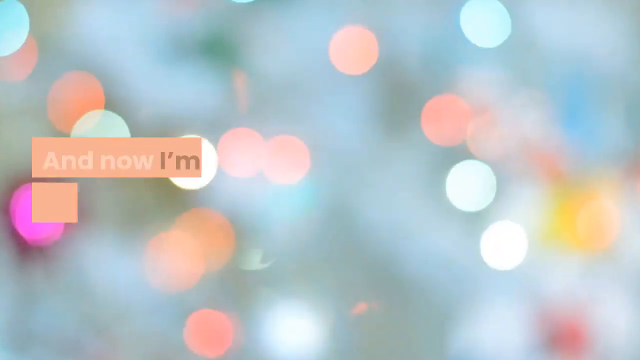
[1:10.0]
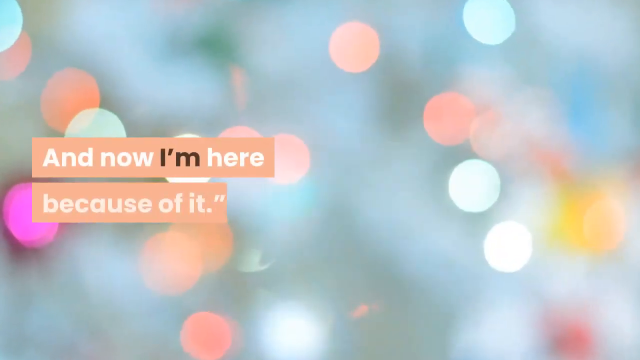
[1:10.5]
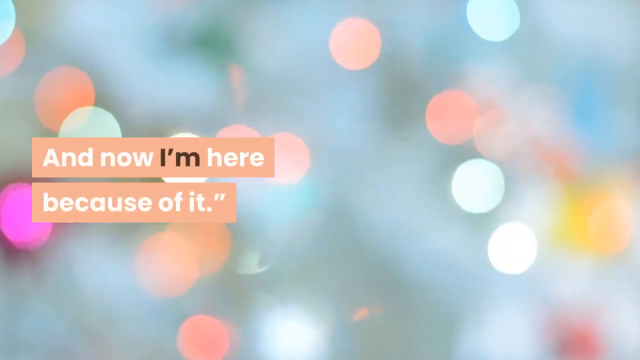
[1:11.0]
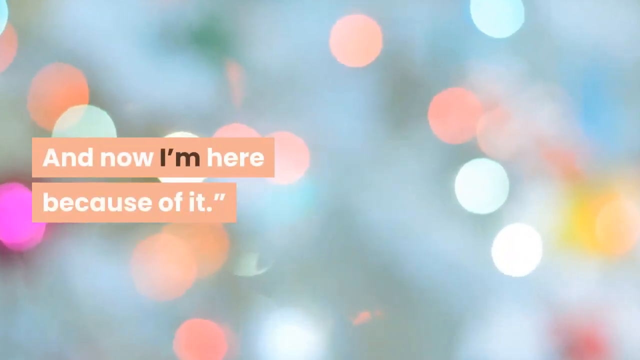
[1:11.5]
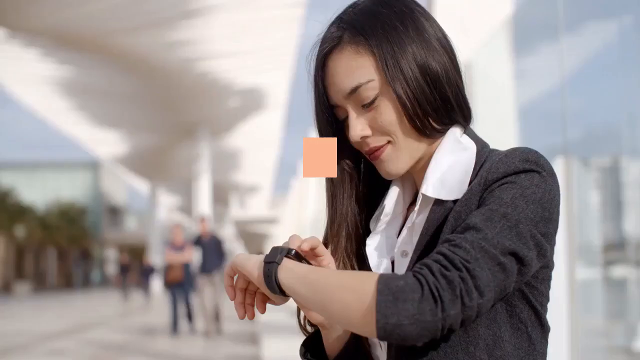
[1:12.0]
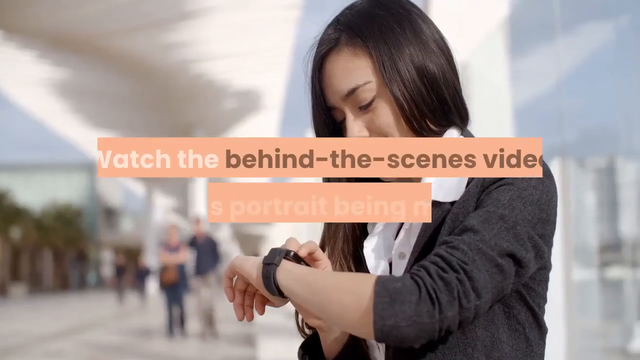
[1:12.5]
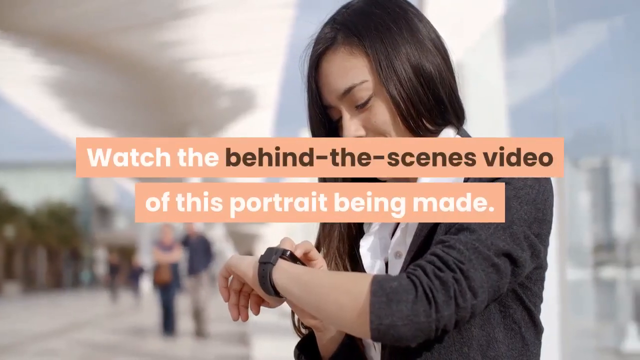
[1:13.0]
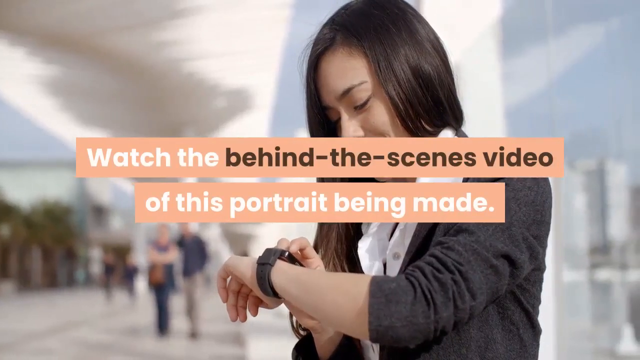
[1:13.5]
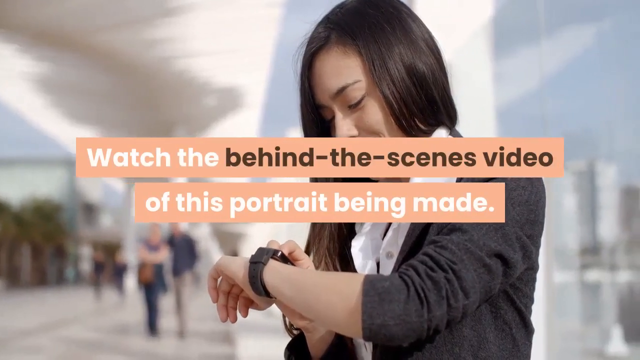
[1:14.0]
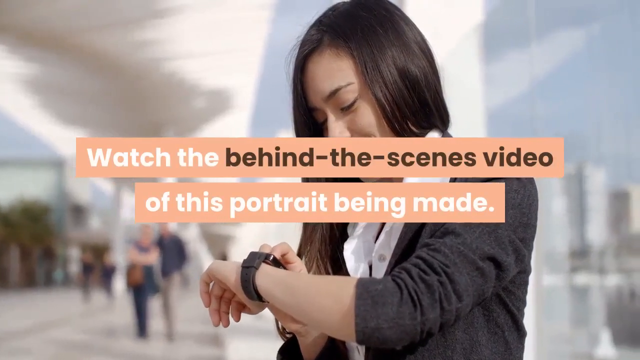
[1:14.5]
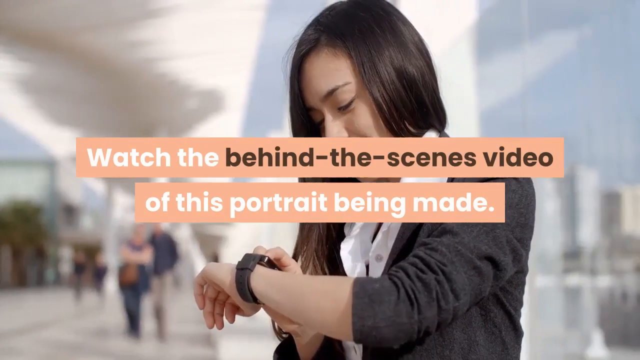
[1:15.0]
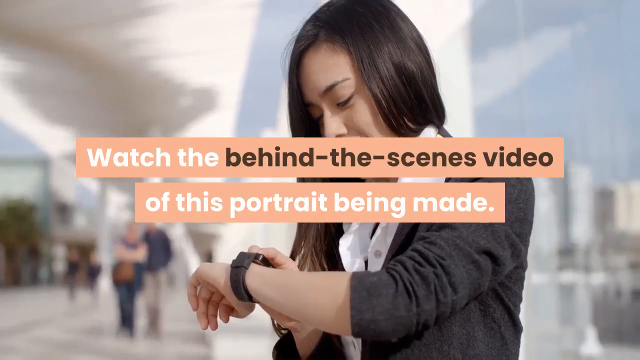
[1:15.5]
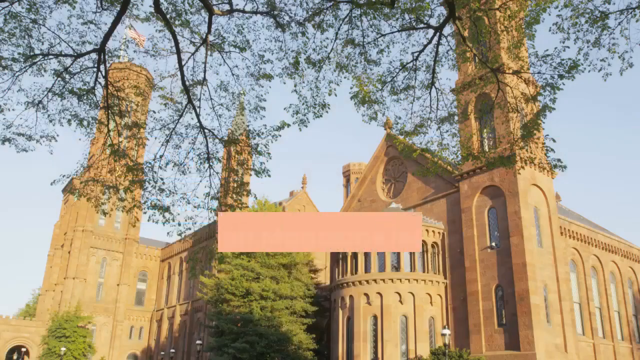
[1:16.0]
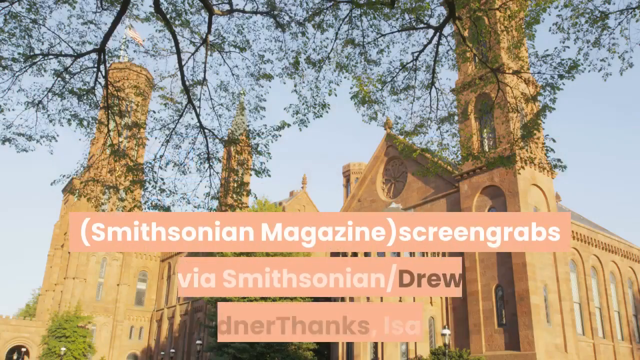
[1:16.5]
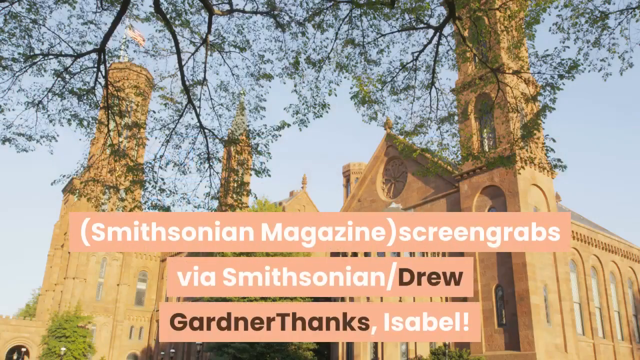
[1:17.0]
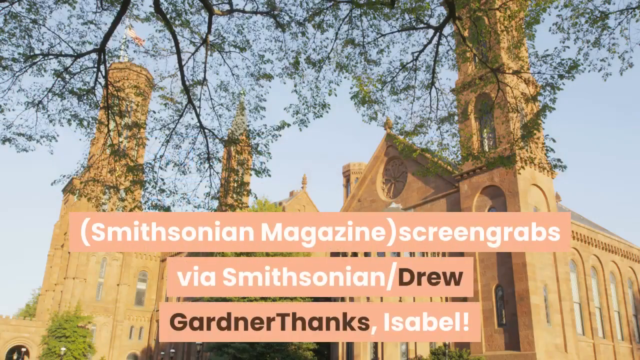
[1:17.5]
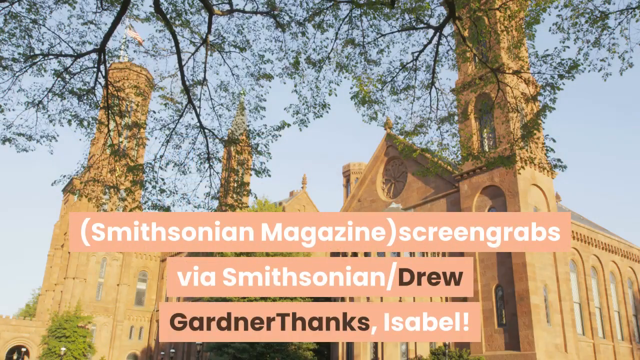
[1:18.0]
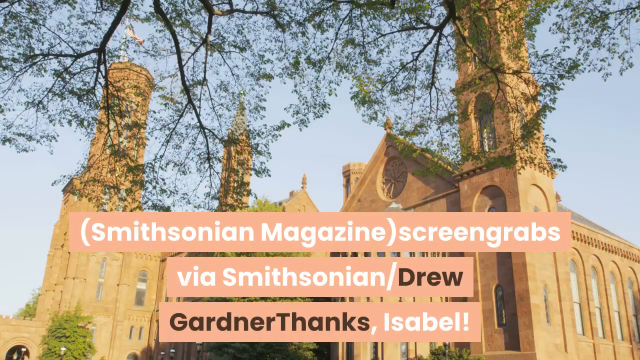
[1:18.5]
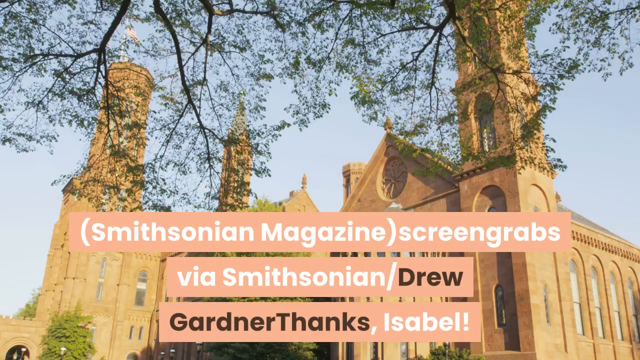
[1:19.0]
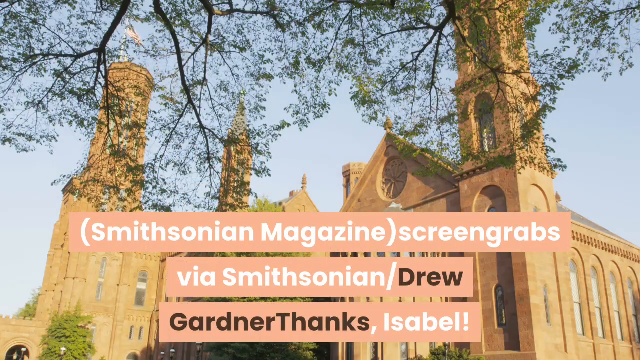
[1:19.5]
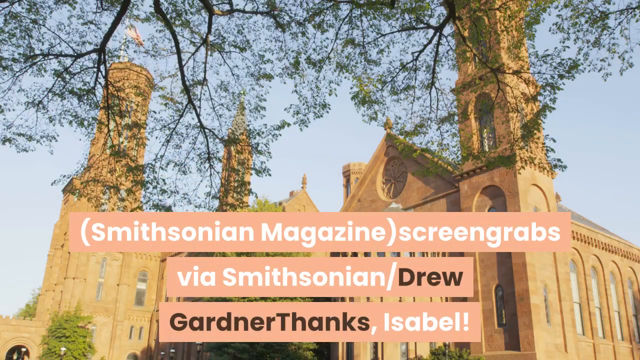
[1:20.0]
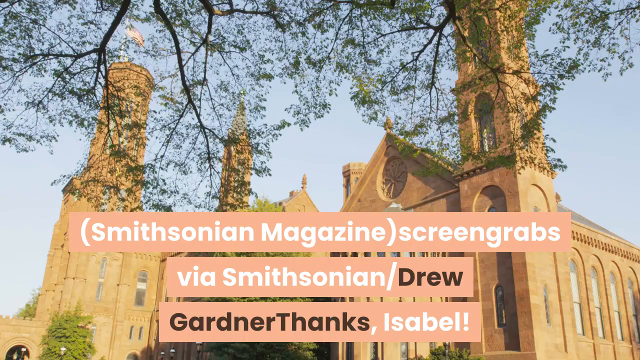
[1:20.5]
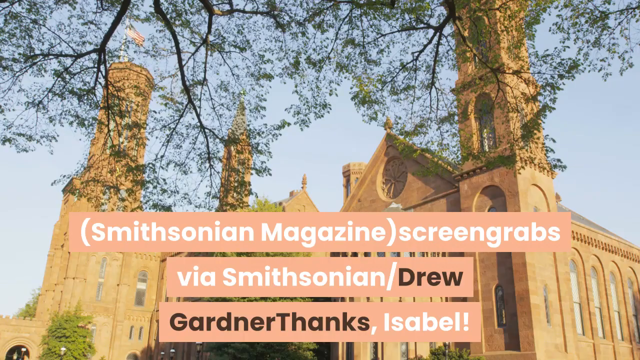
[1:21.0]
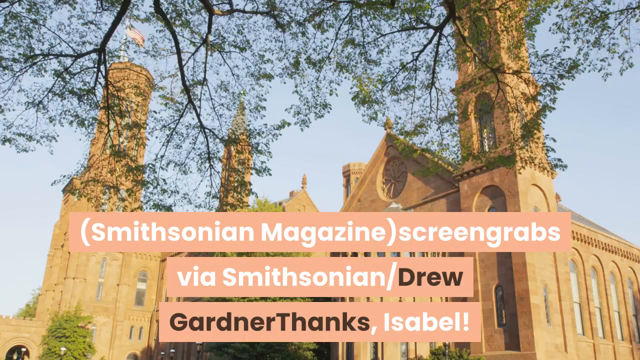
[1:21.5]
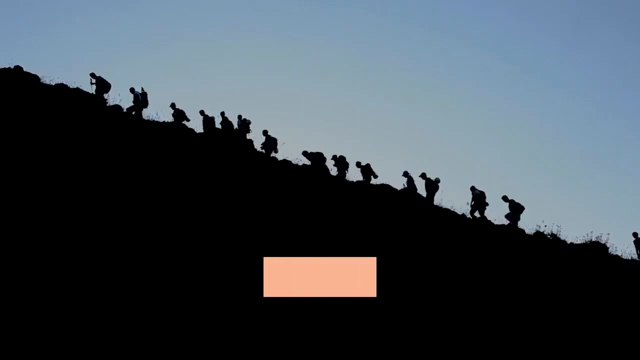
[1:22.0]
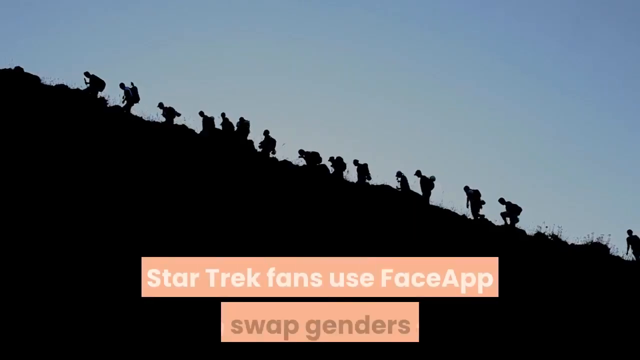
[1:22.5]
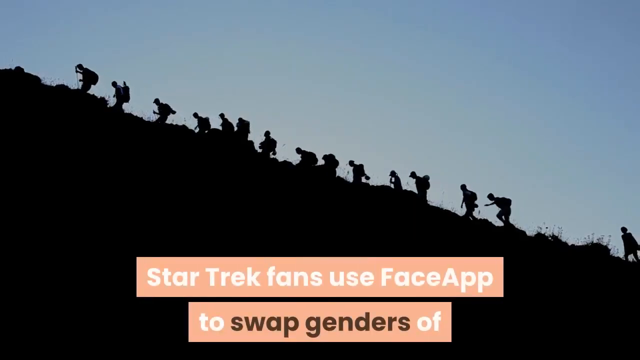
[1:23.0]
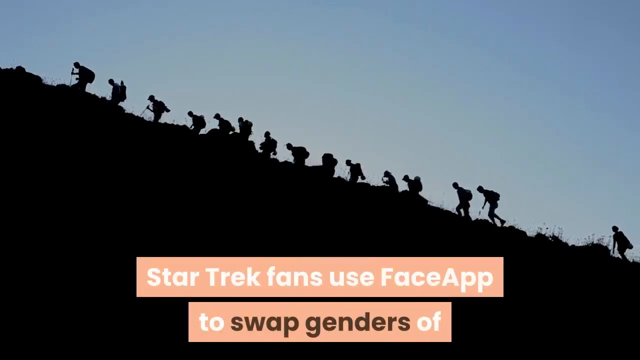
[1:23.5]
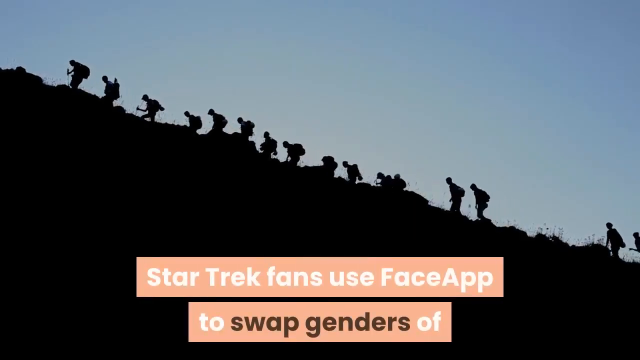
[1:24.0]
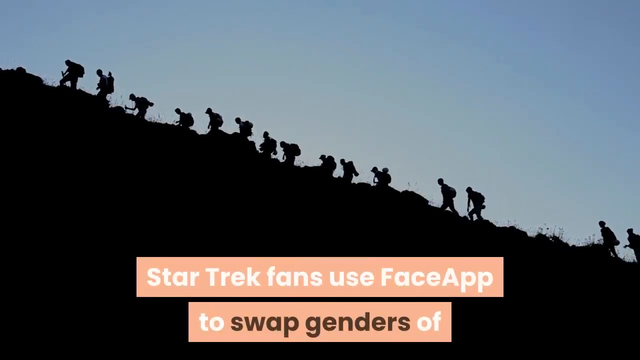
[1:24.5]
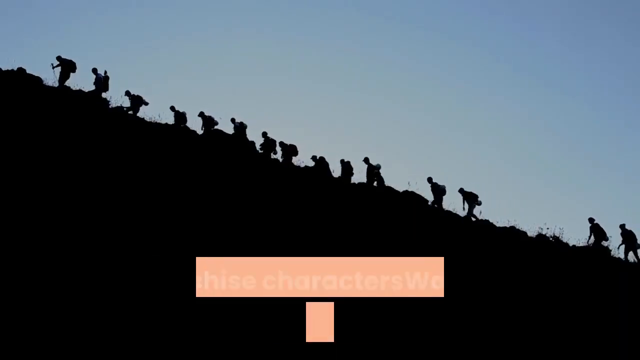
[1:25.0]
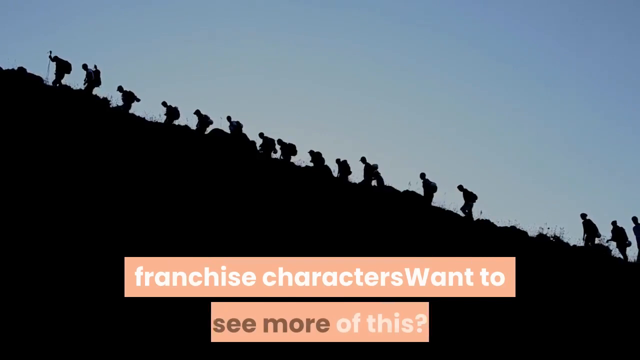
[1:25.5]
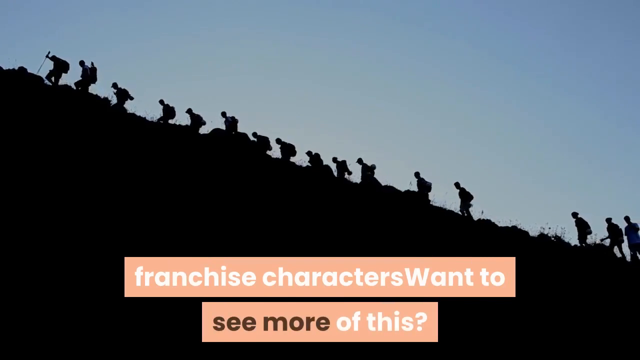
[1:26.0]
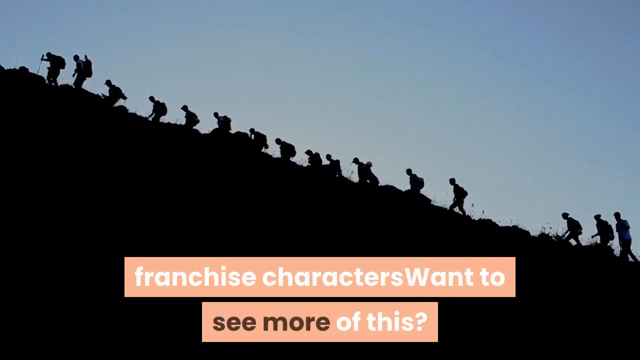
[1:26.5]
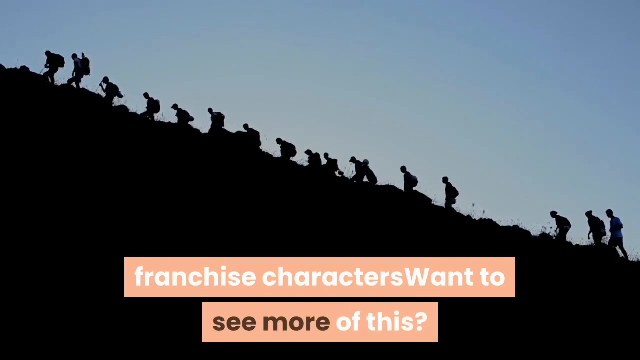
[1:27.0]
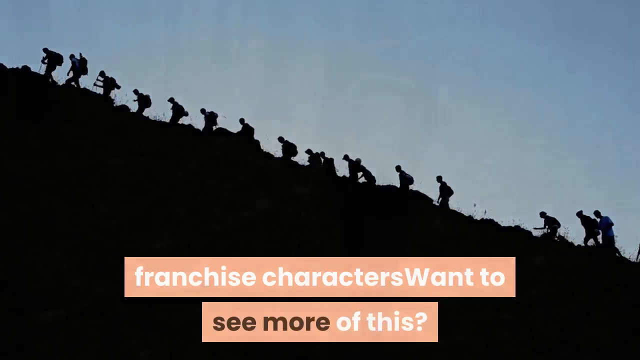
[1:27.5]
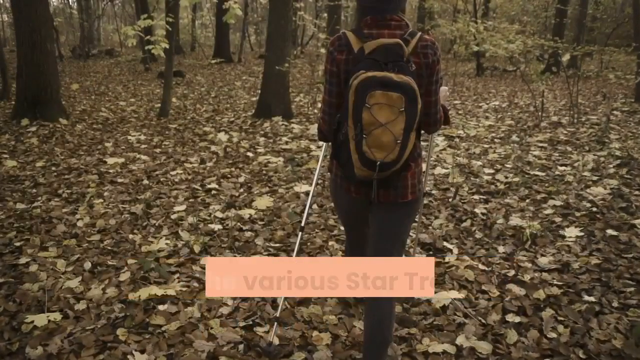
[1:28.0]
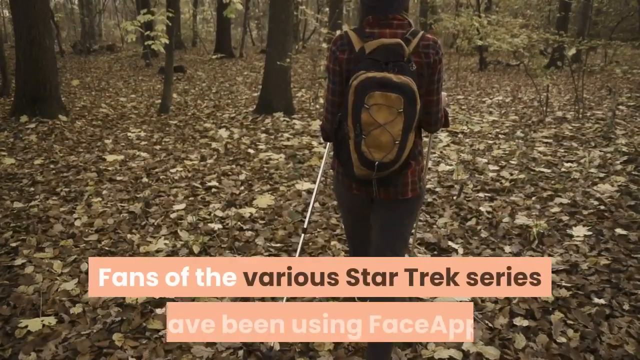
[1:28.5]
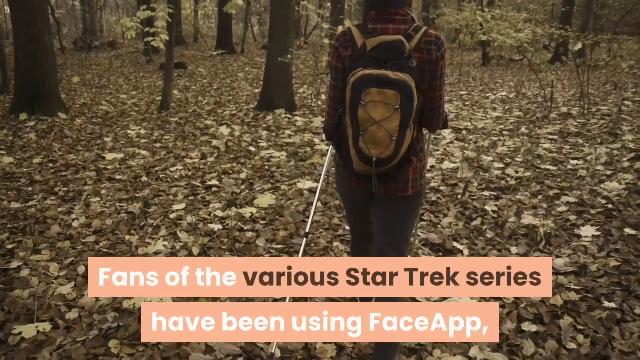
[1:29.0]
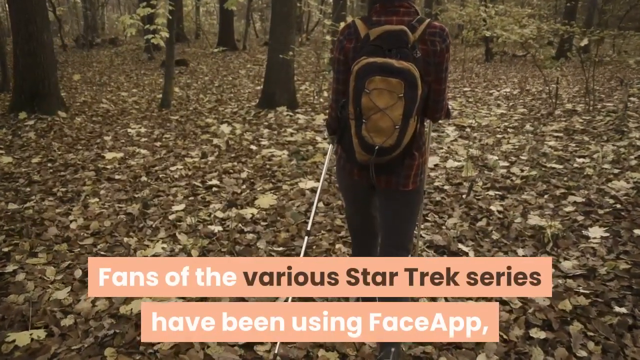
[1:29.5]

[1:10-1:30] The text continues over a brightly coloured background of many circle shapes in different colours that resemble lights: "and now I'm here because of it. Watch the behind-the-scenes video of this portrait being made." The background changes to a focused shot of a woman concentrating on her watch face, with other people blurred behind her. The text continues: "(Smithsonian Magazine) screengrabs via Smithsonian/DrewGardnerThanks Isobel!", with words appearing to lack spacing between them. The text then continues over a dark background of a sloped hill with around 15 men walking up it; they appear to be workmen, though it is not clear what they are doing because of the darkness, and only their outlines are visible. The text reads a headline beginning "Star Trek fans use FaceApp to swap genders of", followed by "Fans of the various Star Trek series have been using FaceApp." The segment ends with no further text.